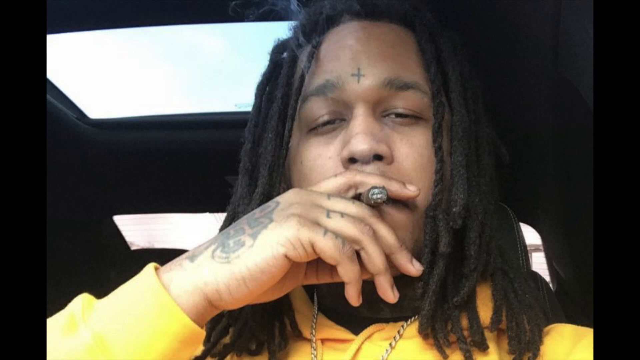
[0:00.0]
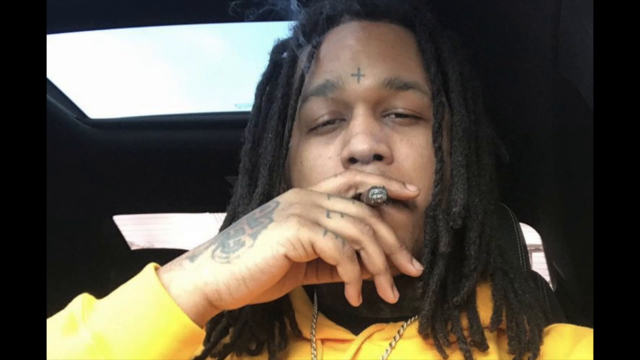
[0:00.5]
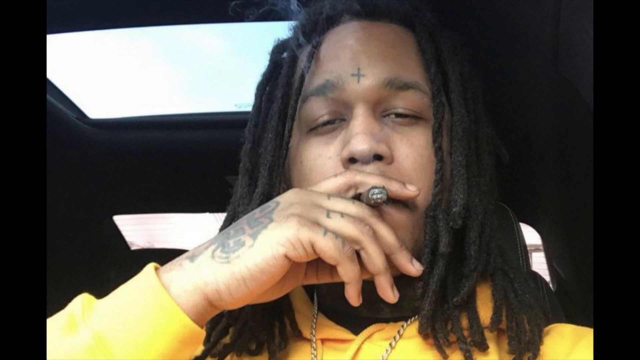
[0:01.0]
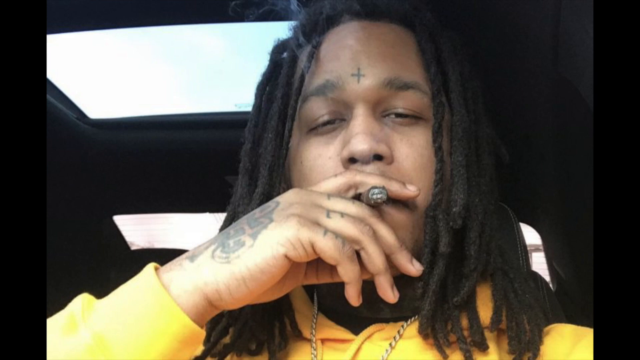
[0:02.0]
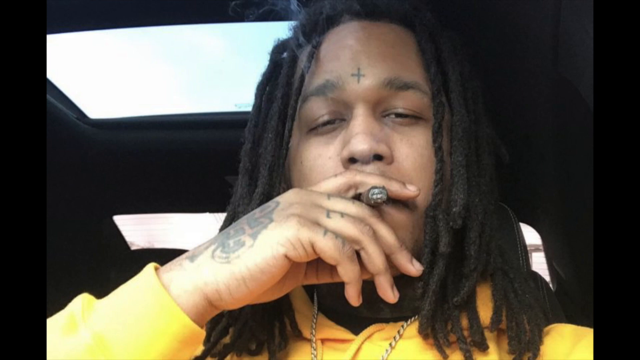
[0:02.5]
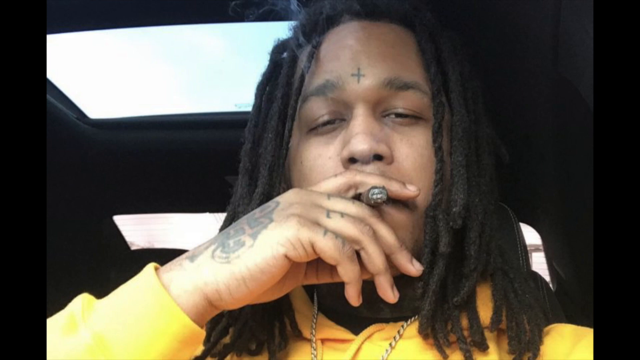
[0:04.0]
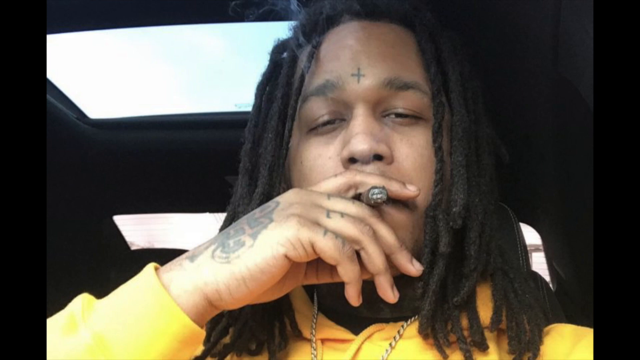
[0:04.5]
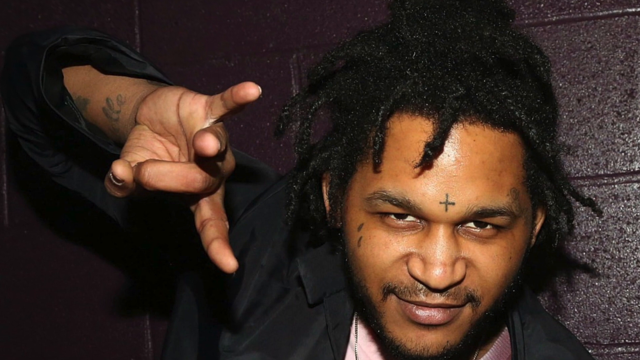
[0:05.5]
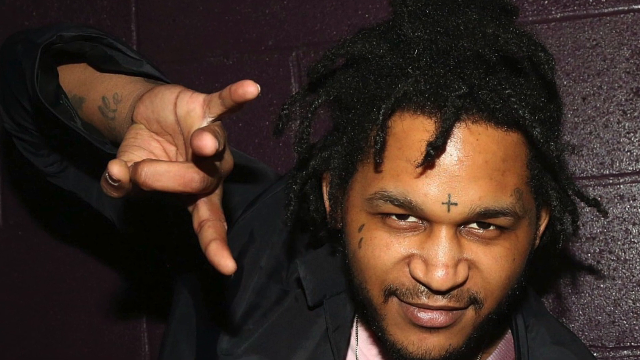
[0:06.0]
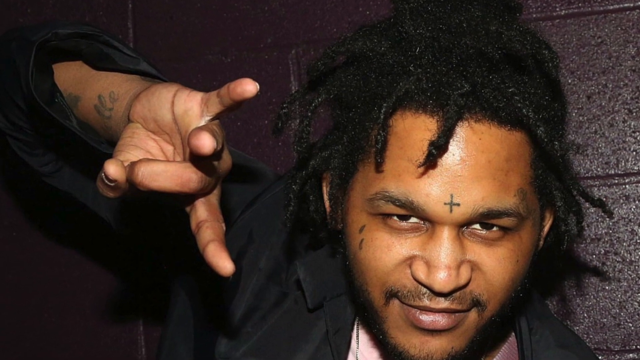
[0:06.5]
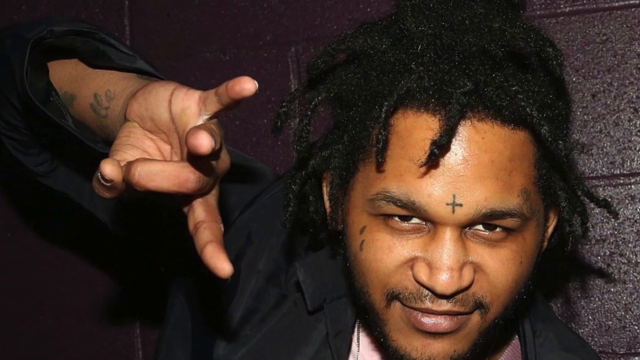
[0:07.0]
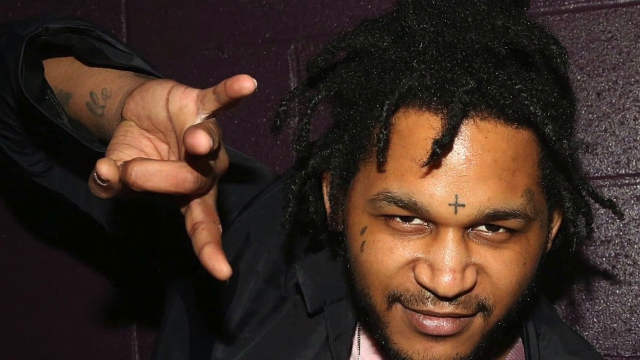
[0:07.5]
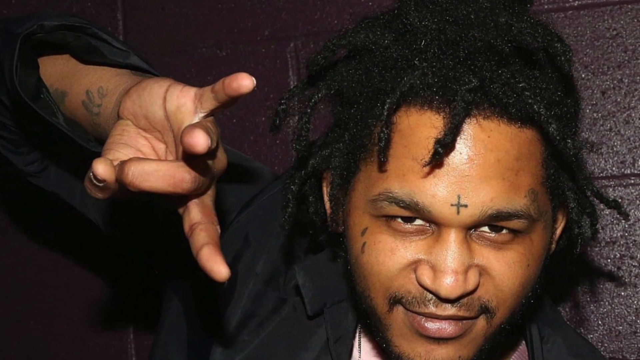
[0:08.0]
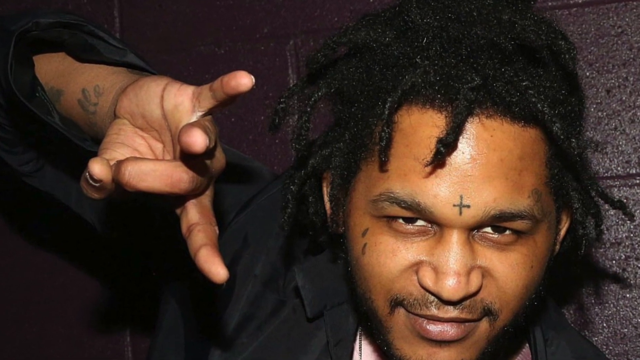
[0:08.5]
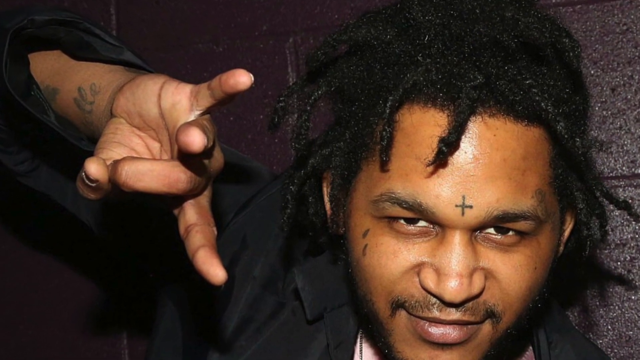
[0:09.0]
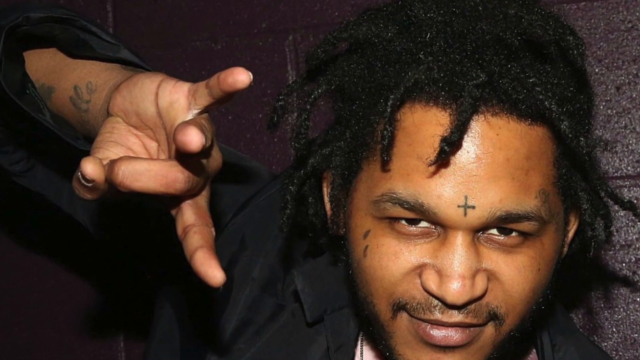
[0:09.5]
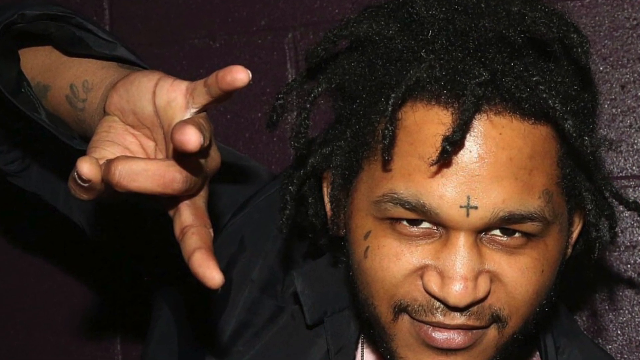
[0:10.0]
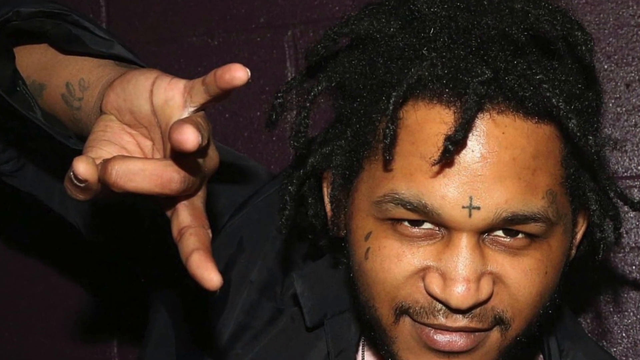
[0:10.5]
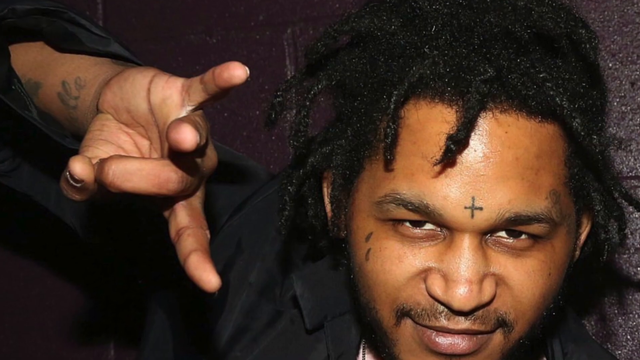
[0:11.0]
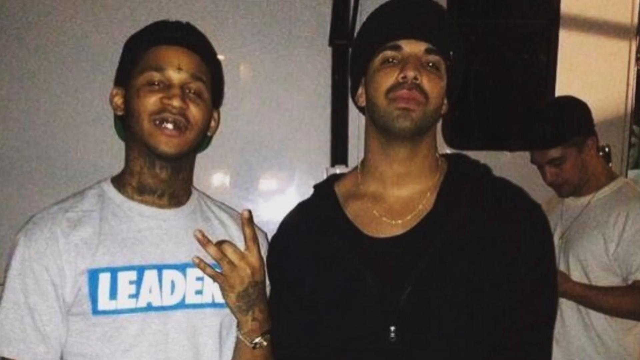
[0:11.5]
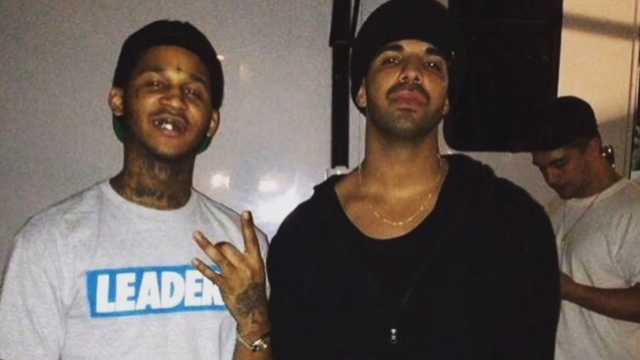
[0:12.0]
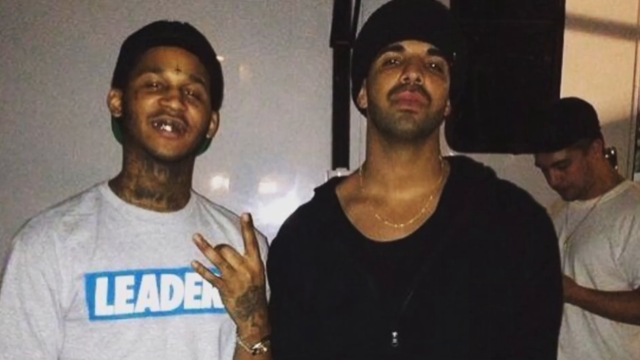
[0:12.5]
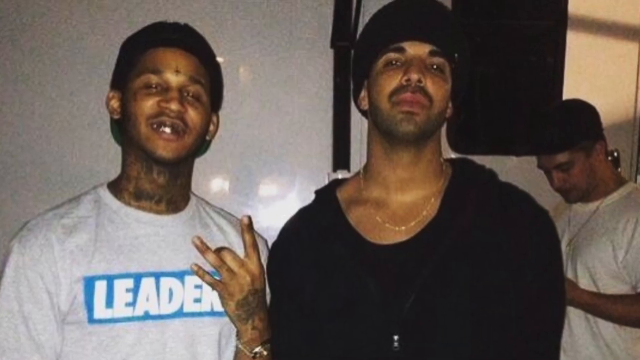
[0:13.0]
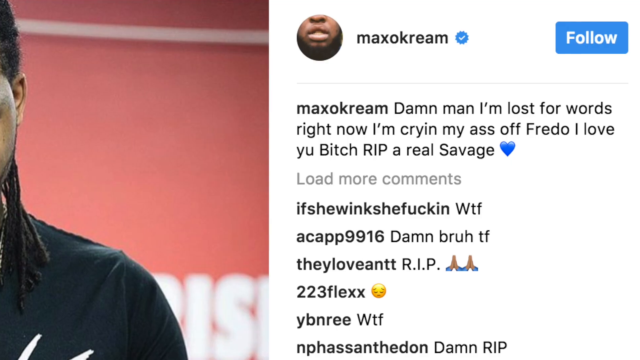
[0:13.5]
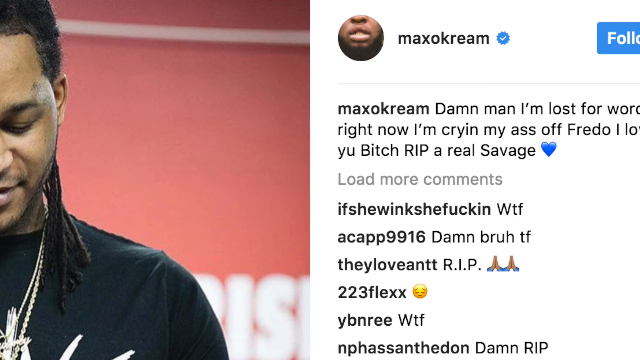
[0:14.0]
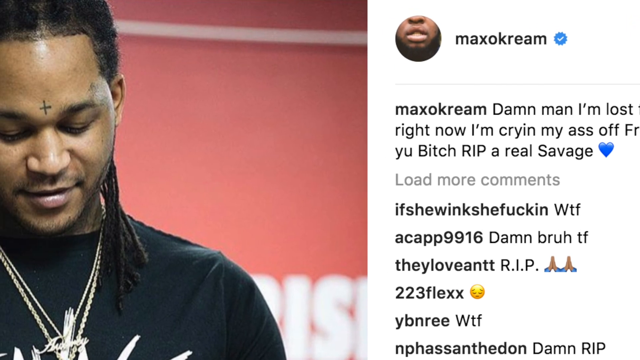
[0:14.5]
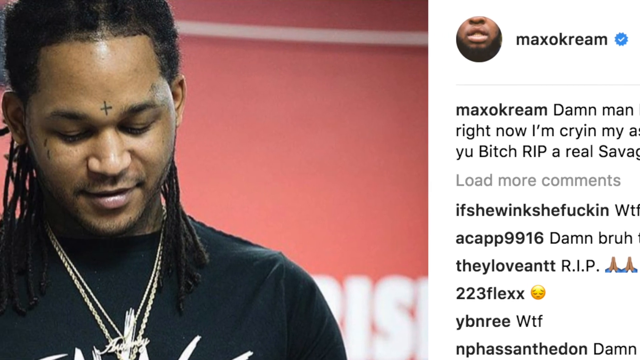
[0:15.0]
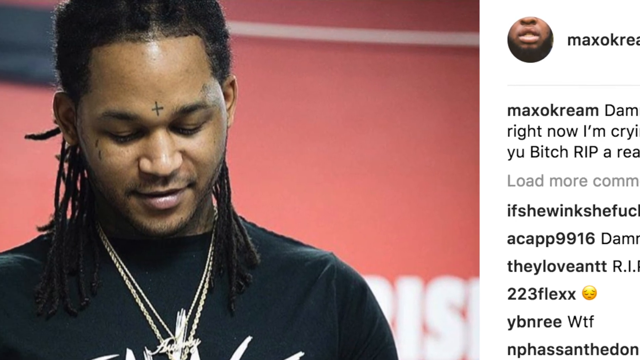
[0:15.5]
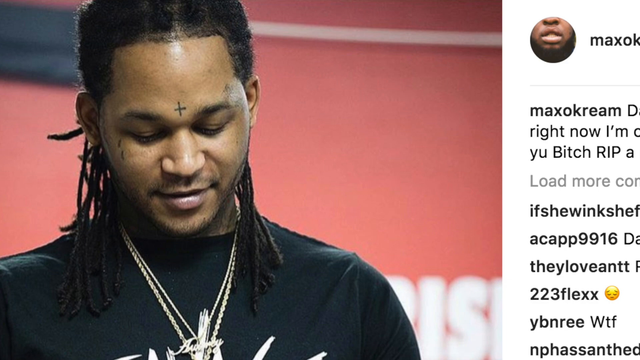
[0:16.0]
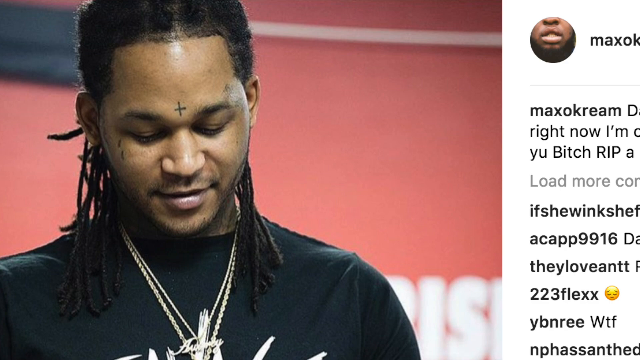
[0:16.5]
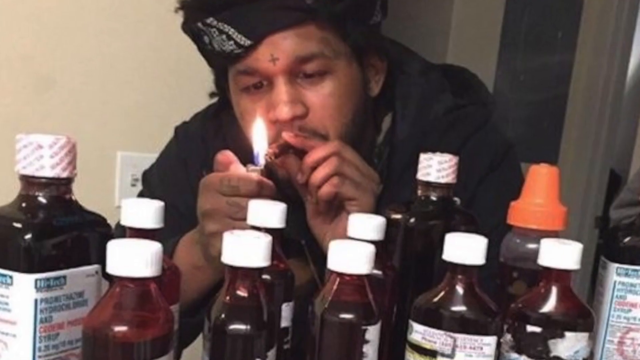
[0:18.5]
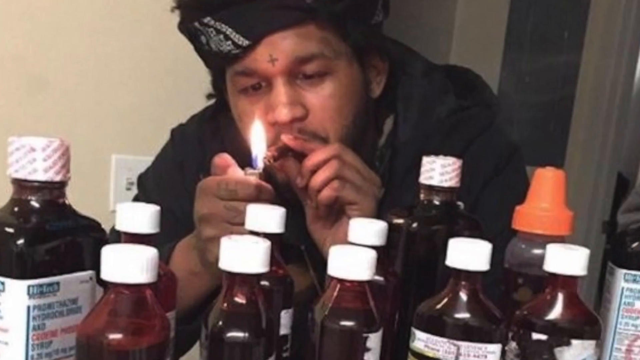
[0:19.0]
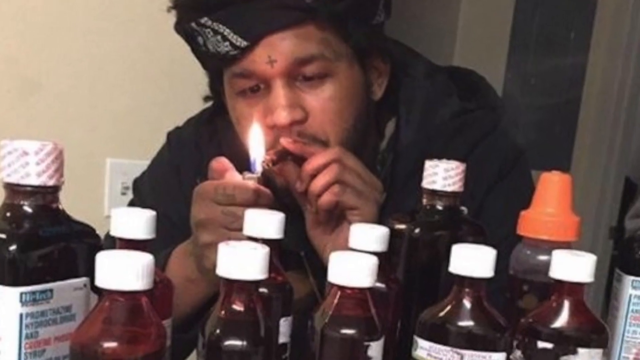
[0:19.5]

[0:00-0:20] A man has a brown cigar in his mouth, with his right hand raised and the cigar between his index and middle fingers over his mouth. He has a little cross on his forehead, black dreads, and a tattoo on his right hand. The close-up shot of his face appears to be inside a car, or at least a window is open above and behind him, and the black interior of the car is visible. The video transitions to another close-up of the same man, showing his right hand making a symbol: his ring finger is pulled back and held by his thumb while his other fingers point toward the camera. His face is on the right and he is kind of smiling as the camera zooms in. Next comes a shot of a few other men: the same man on the left wears a white shirt that says "leader," a man on the right is in black with a gold chain, and a guy in white in the background is looking down at something. An Instagram post follows, showing the same man on the left in a picture, looking down; on the right is a profile picture showing just a mouth, with "Maxo Cream" next to it, and multiple comments from people below. Then the man is shown lighting up his cigar in front of a bunch of bottles with white lids.